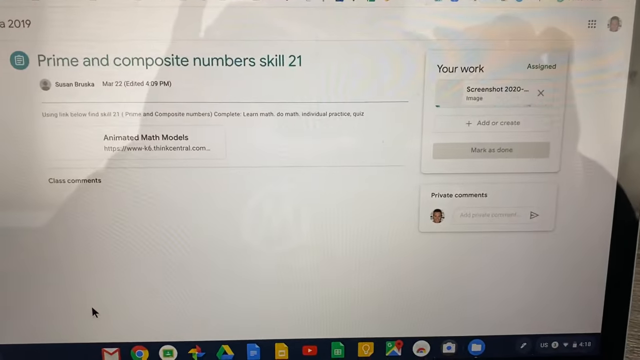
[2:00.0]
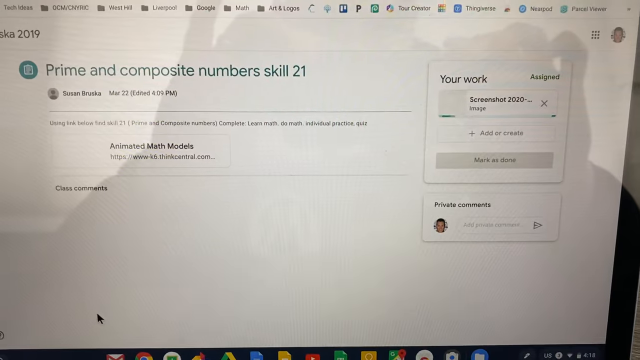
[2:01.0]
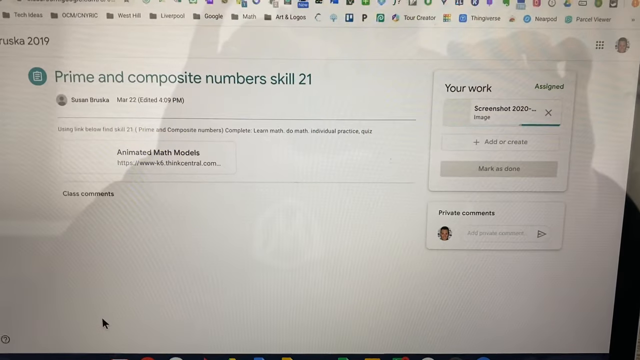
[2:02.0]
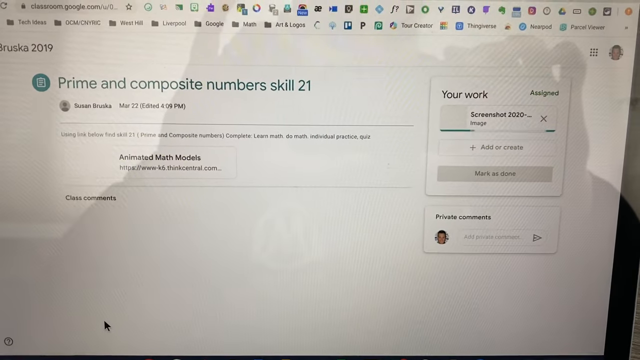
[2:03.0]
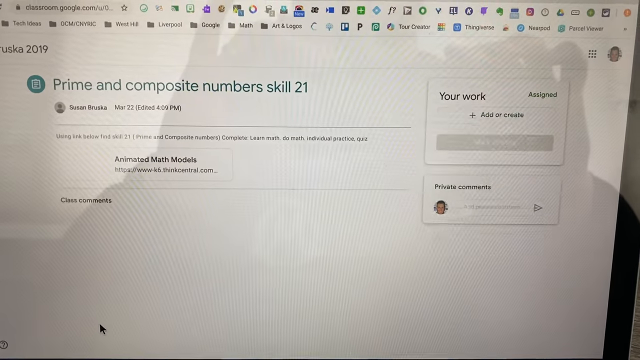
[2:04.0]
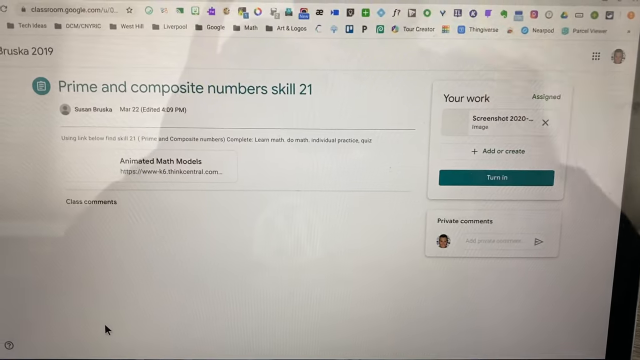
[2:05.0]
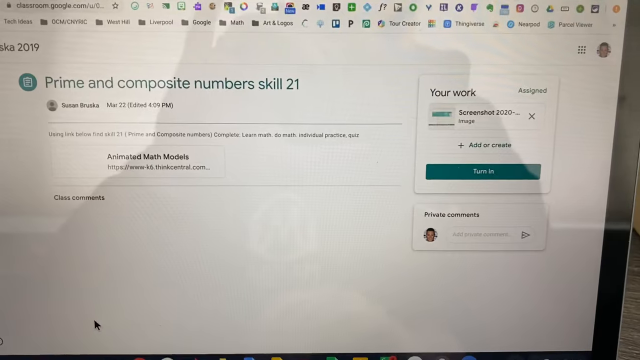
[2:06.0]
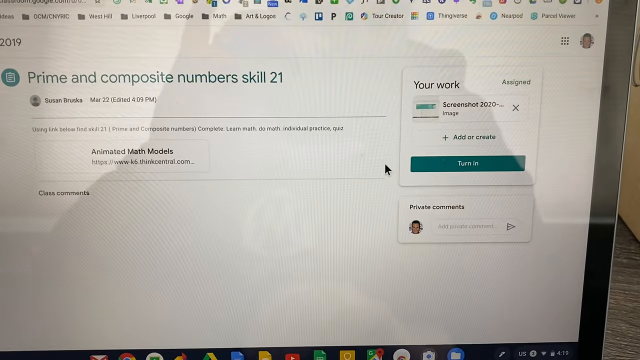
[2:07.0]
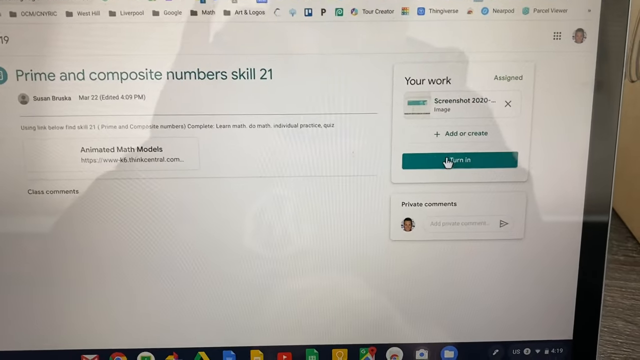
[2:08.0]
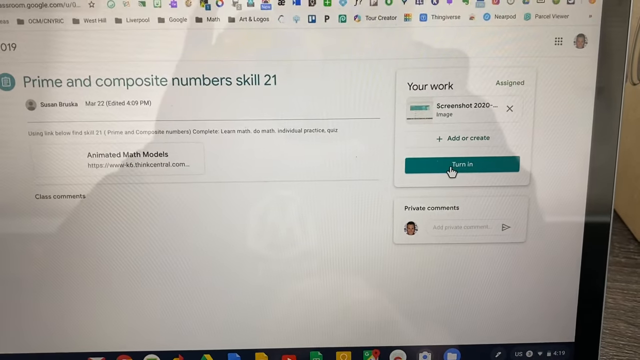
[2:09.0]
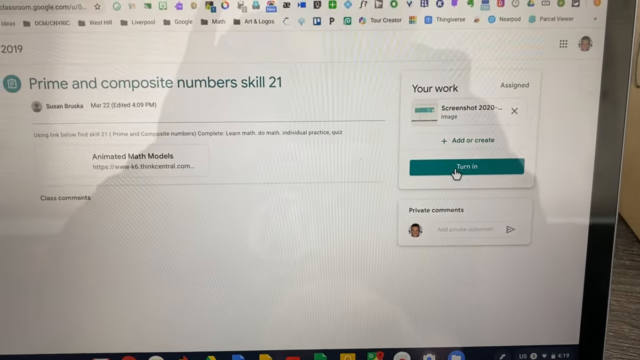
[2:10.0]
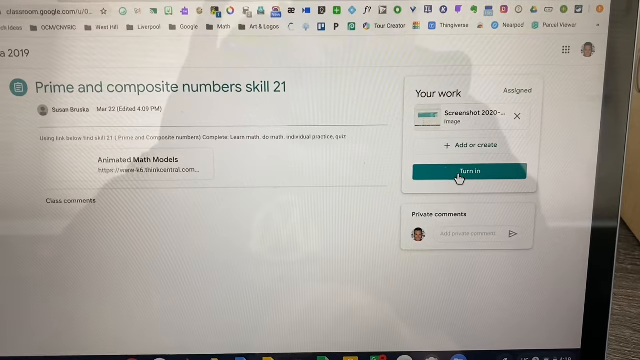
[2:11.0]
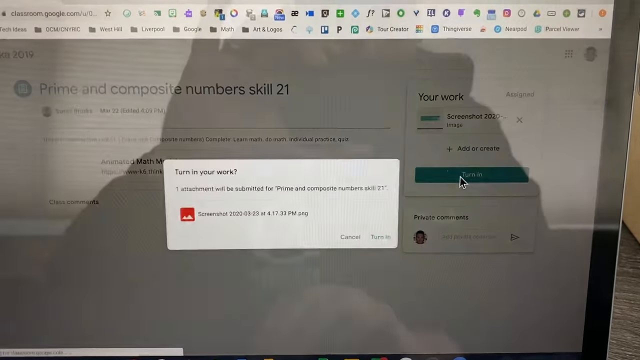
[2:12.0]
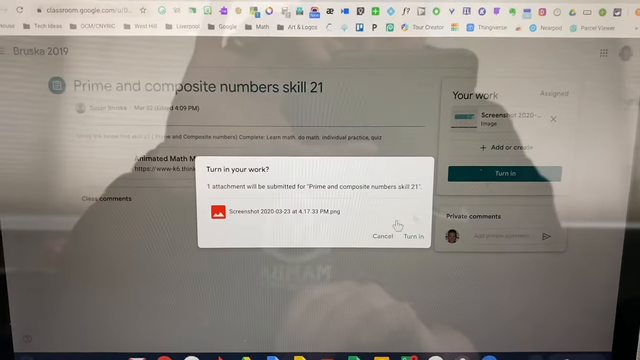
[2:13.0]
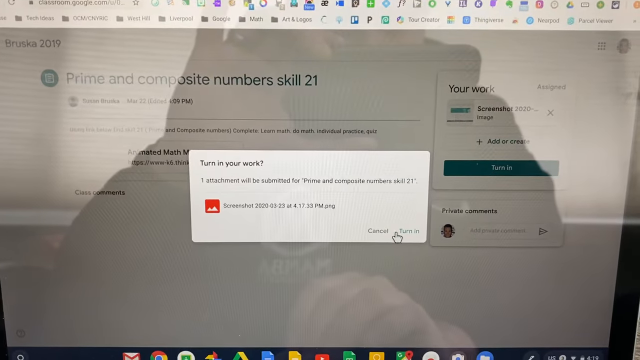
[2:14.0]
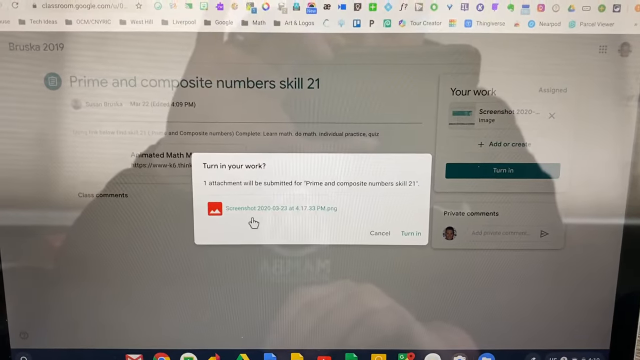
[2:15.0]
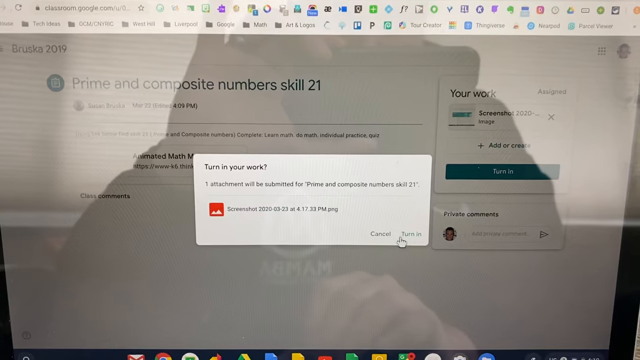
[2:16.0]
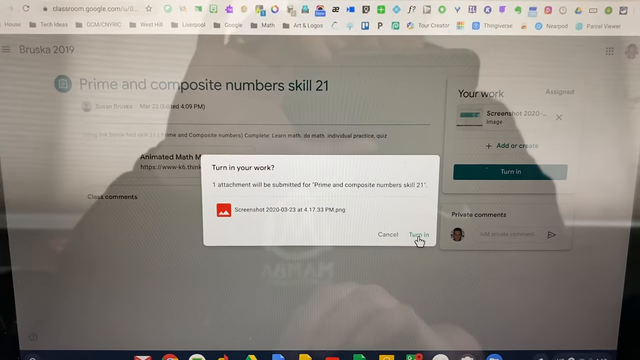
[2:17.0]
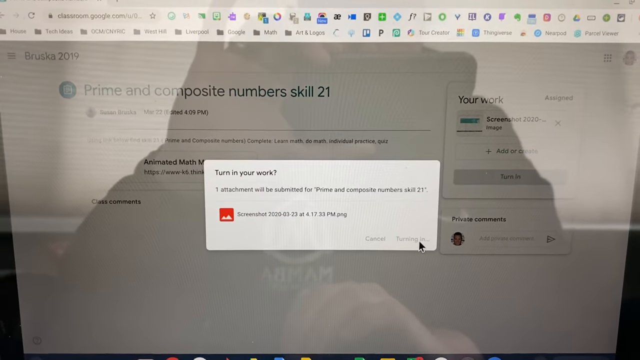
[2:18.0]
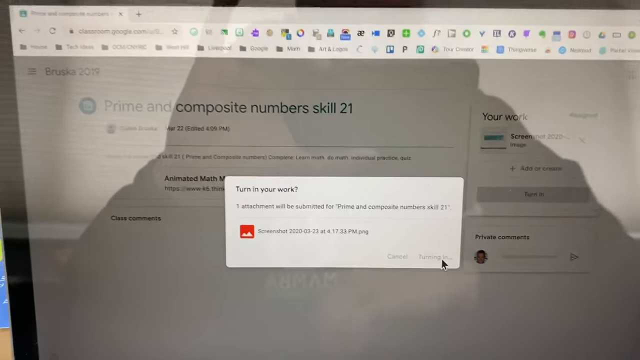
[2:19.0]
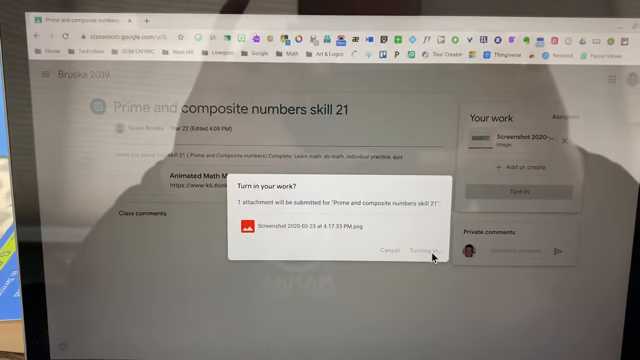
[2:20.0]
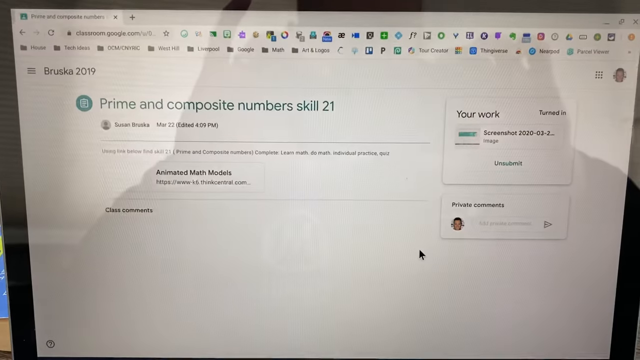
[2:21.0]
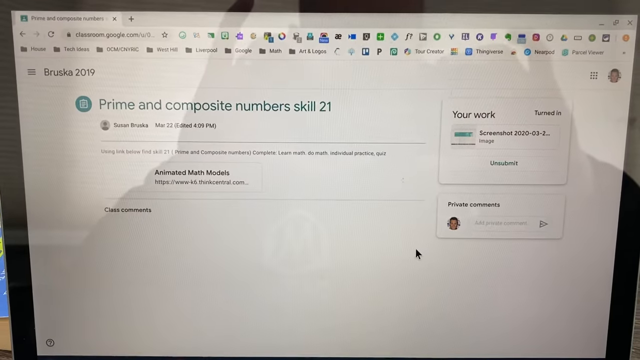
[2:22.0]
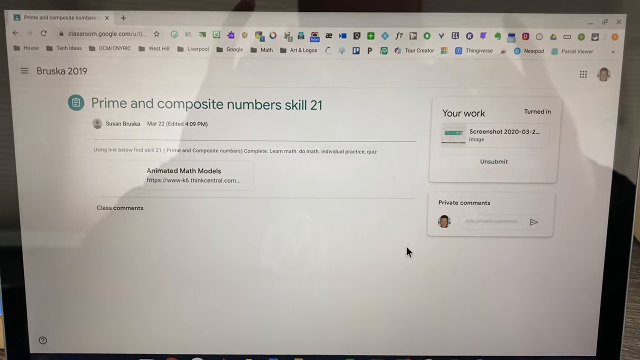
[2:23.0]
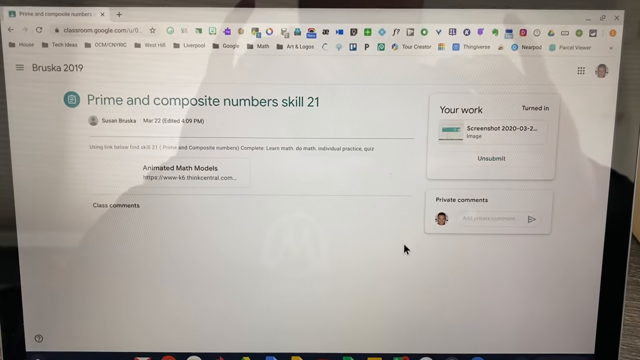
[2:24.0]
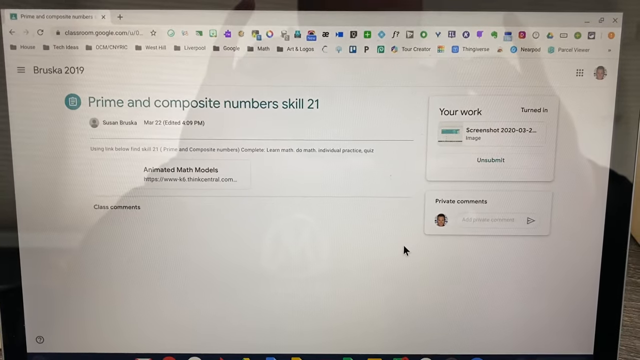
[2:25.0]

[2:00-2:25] In "Prime Composite Numbers Skill 21", the title of the class, the screenshot has uploaded and "turn in" is clicked. Another window opens that says "turn in your work"; the item is double-checked and "turn in" is clicked. The page shows a date, a time, and class comments, along with the times the work was edited, started, and turned in.